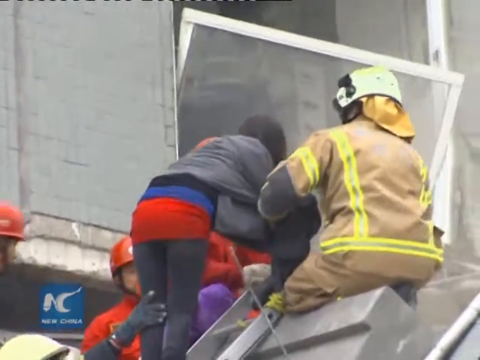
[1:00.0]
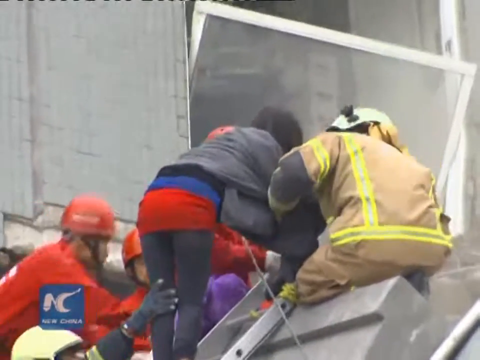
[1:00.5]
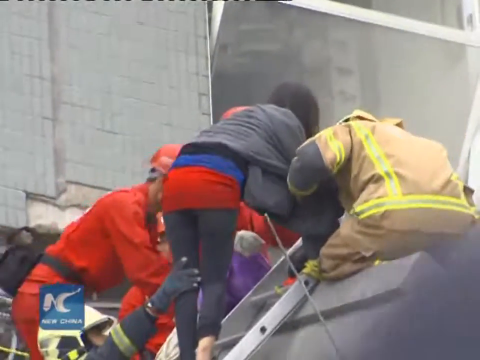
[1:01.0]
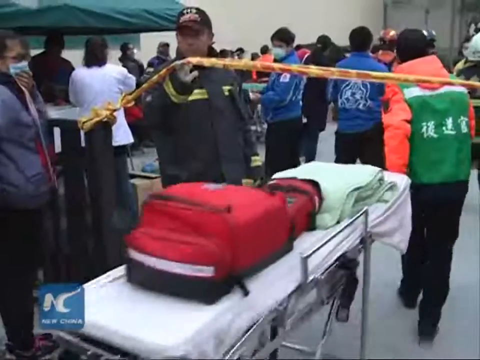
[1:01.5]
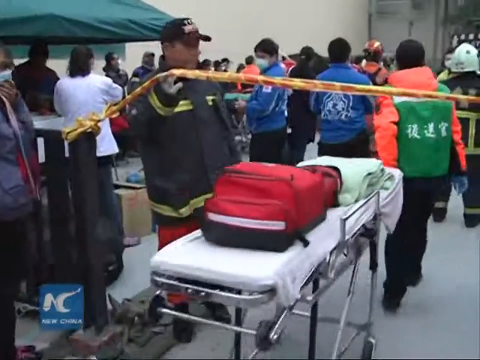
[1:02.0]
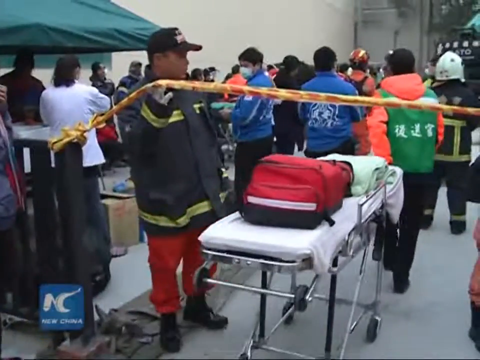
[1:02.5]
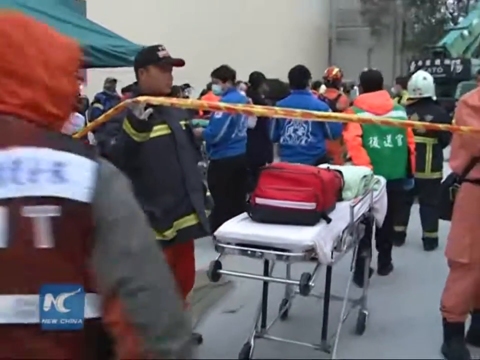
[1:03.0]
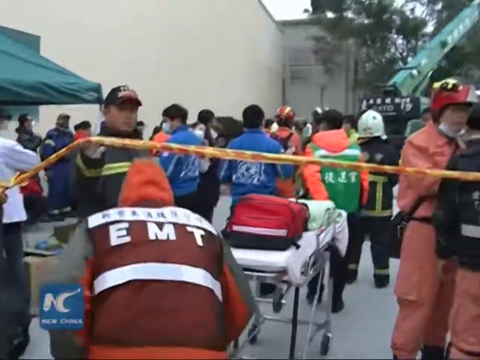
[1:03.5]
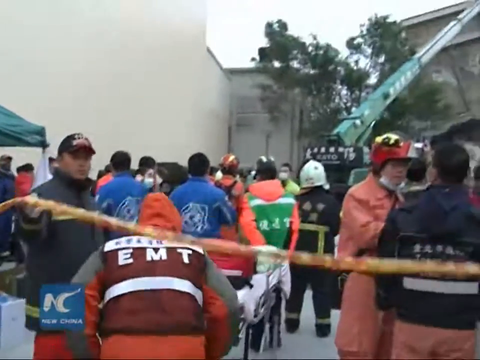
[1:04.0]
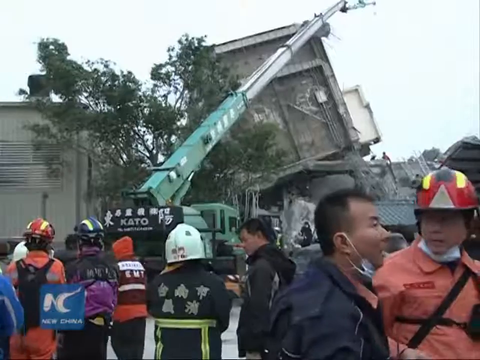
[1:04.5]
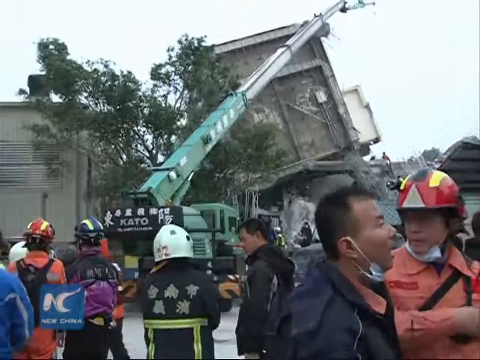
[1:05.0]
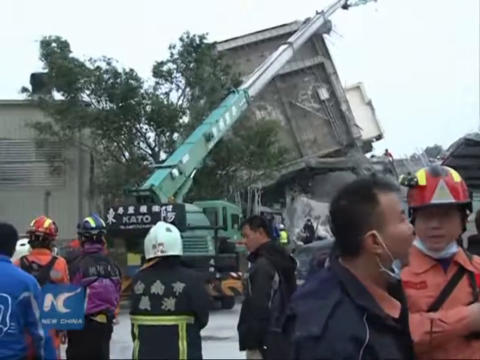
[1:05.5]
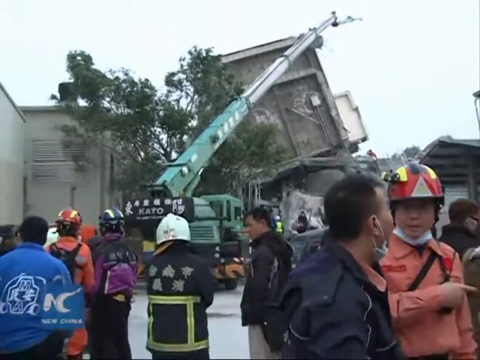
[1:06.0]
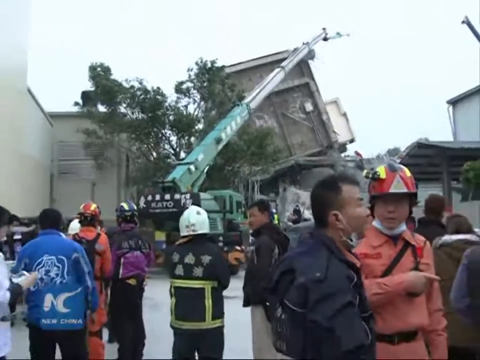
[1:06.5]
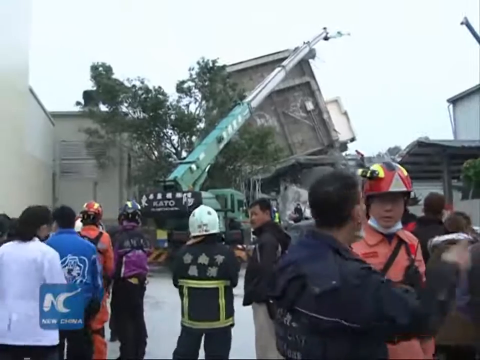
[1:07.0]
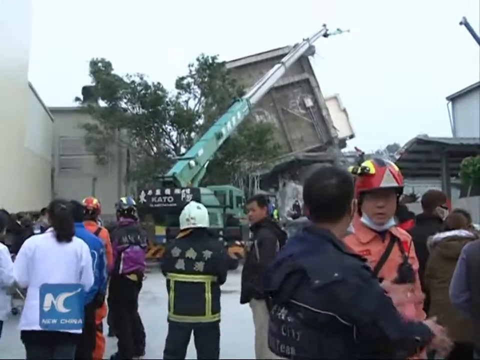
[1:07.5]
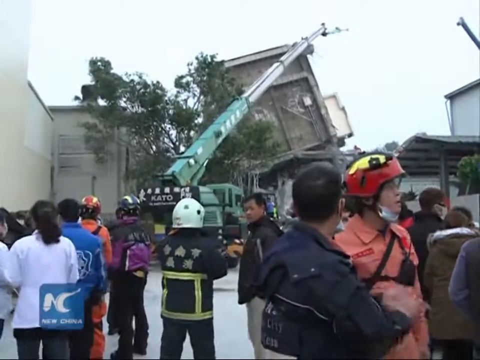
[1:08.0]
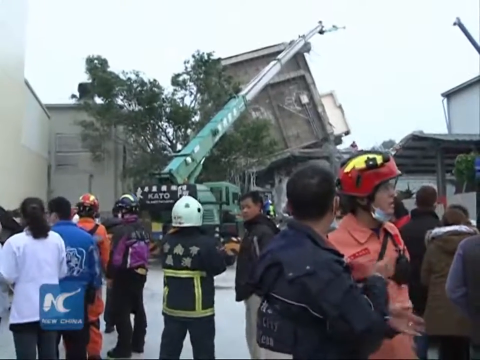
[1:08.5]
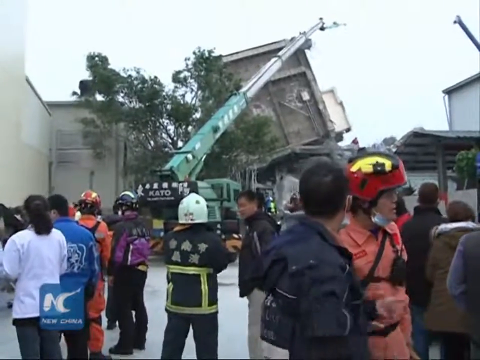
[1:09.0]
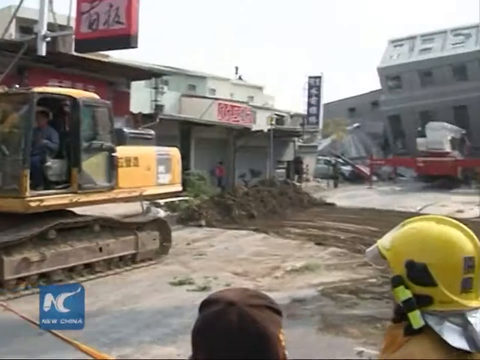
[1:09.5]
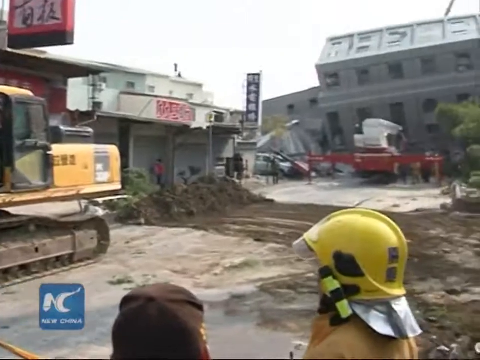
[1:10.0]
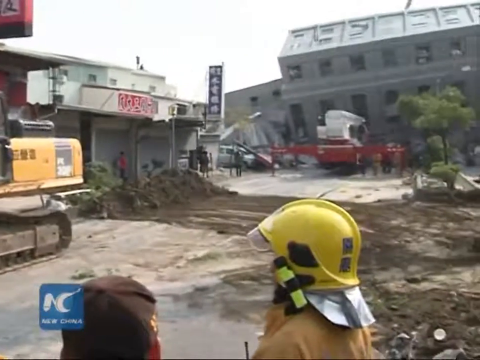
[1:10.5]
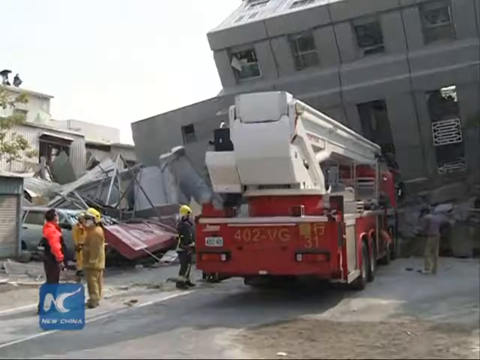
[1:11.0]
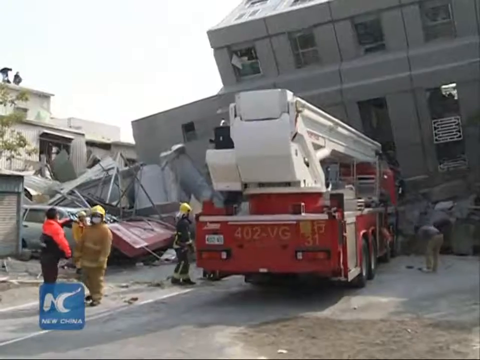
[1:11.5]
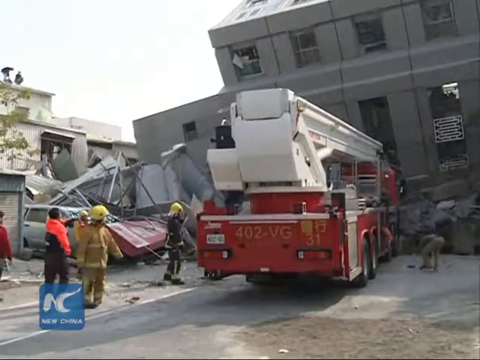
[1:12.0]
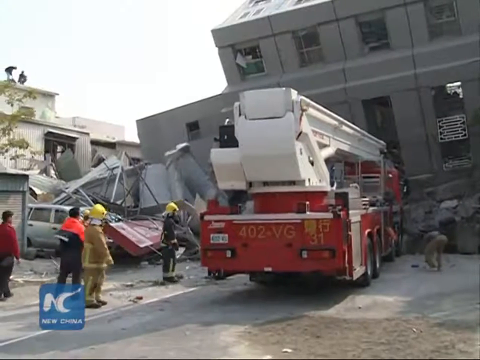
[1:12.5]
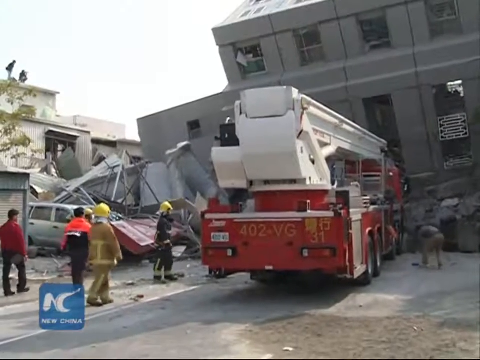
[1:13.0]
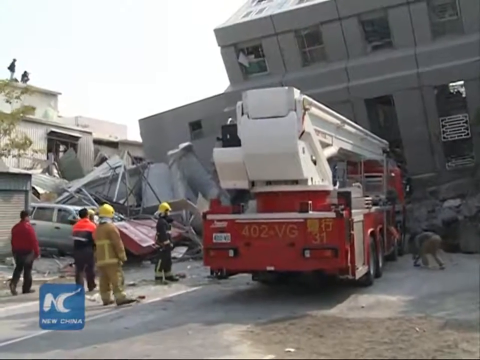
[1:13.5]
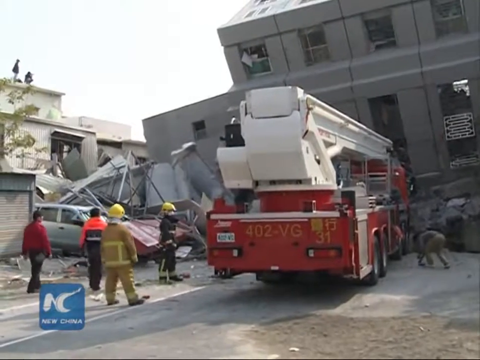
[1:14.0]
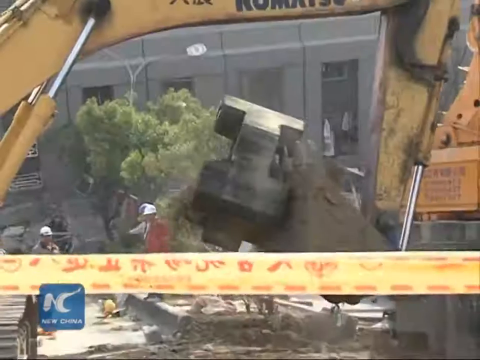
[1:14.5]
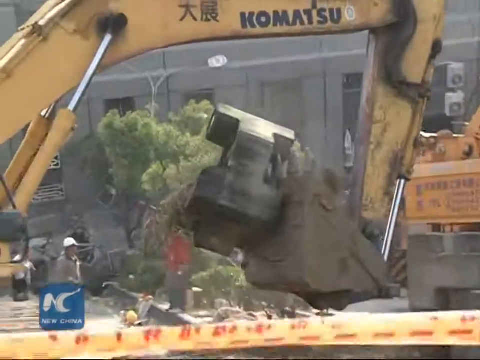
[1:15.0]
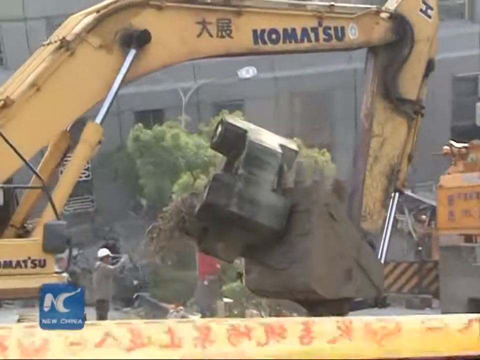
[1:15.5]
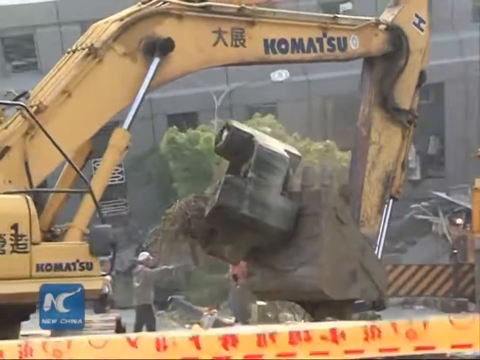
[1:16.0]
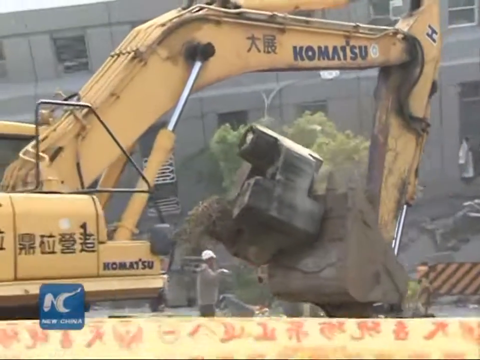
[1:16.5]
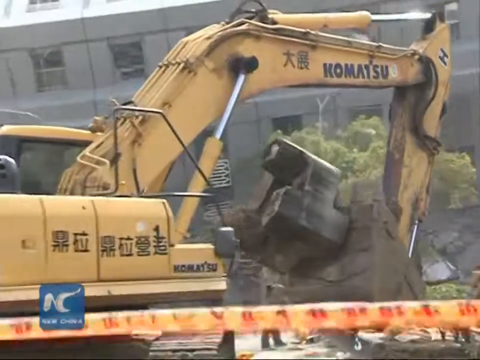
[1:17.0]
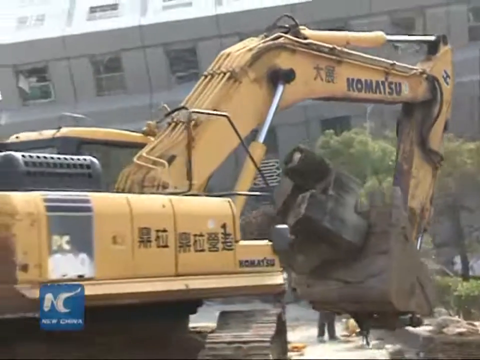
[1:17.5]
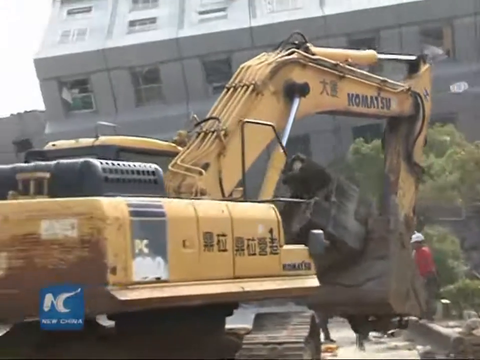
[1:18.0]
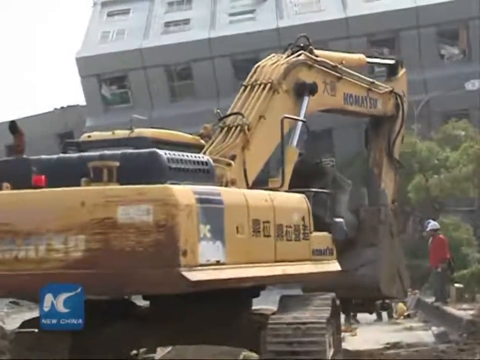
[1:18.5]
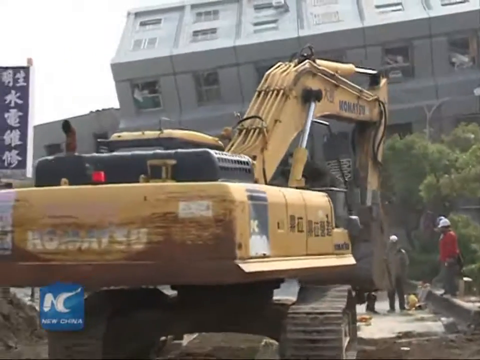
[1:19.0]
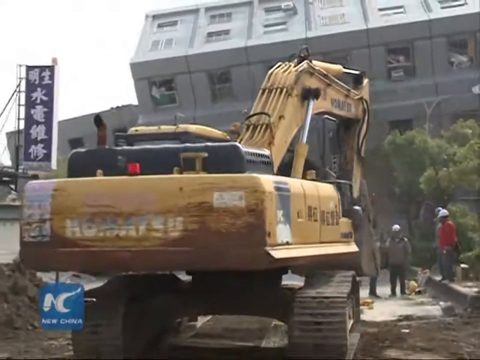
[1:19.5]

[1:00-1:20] A group of people who seem to be emergency responders stands around a ladder beside a building. A woman is among them, and a man holds her left leg, probably to support her. A man then pulls a stretcher with a pink bag on it while another man lifts a yellow and red emergency cordon to let him through. A man there wears a dark jacket with lemon green stripes and a cap. A crowd is present, and a crane is in front of a tree in the background; it seems to be an emergency scene. Next, people are gathered in front of a collapsed building, with a green crane bearing the brand KATO sitting outside. The people are around the bottom of the screen, some wearing helmets, and two men at the bottom right have their face masks below their chins. What looks like a road-levelling vehicle is on the left side of the screen. The collapsed building appears slanted at an angle, followed by a close shot of it with a red and white crane parked in front and emergency workers scattered around it. A close shot then shows an excavator that seems to have scooped some things out of the ground; it is mainly yellowish, with the brand name KOMATSU written in black.